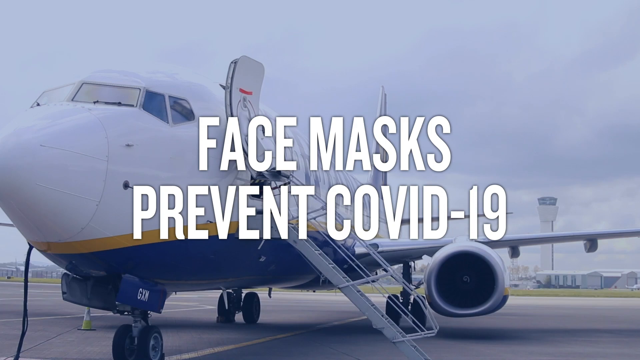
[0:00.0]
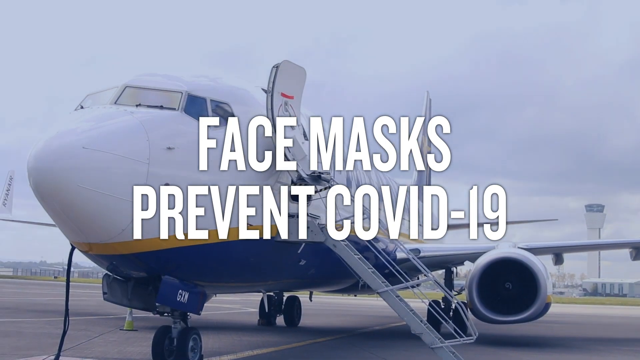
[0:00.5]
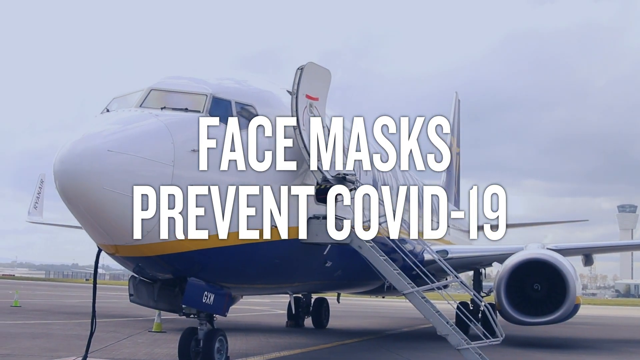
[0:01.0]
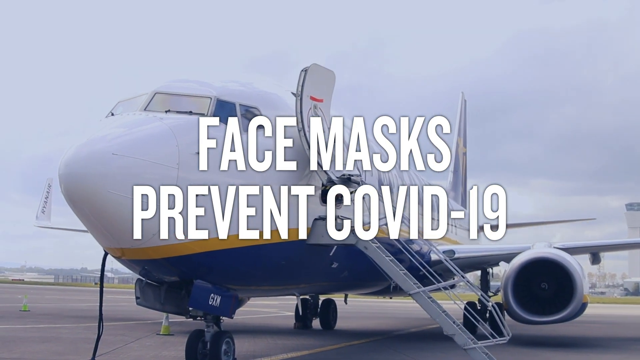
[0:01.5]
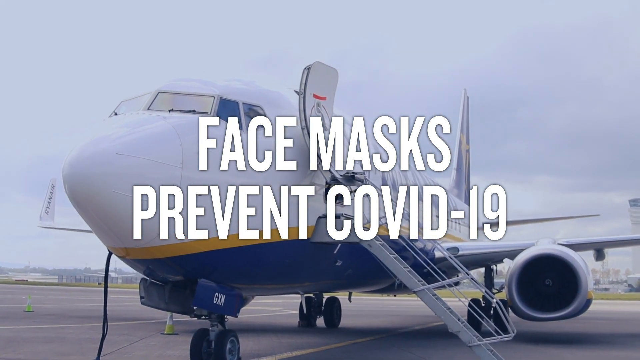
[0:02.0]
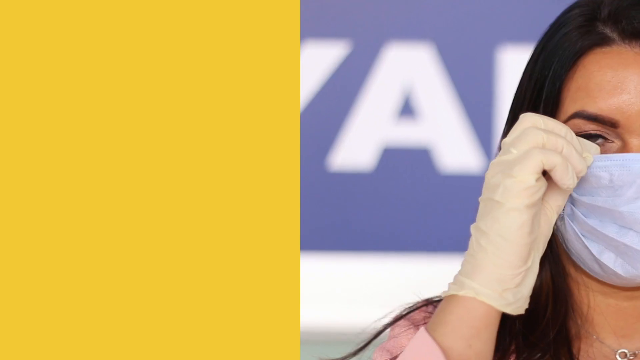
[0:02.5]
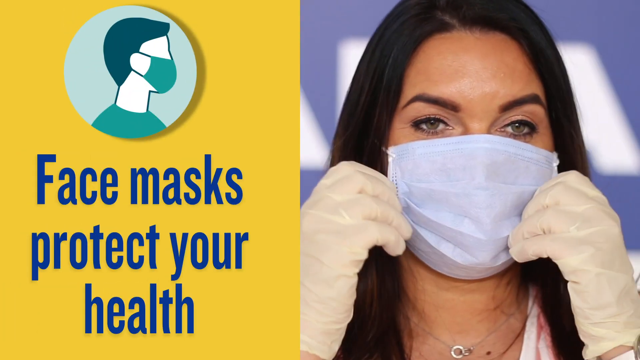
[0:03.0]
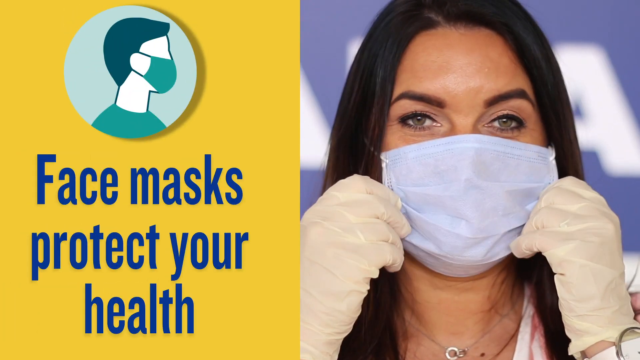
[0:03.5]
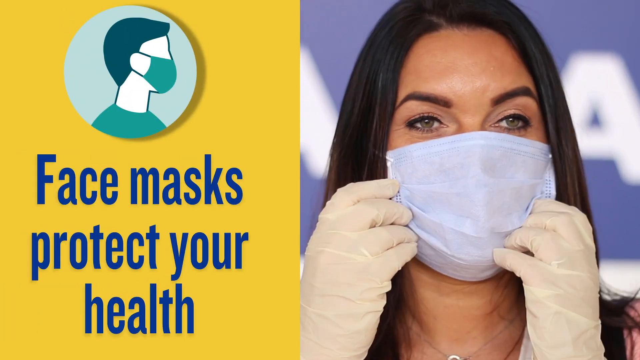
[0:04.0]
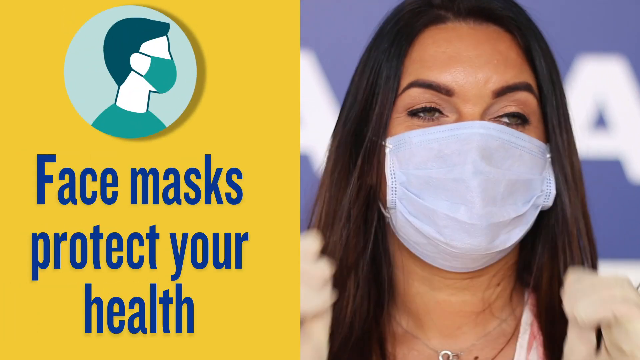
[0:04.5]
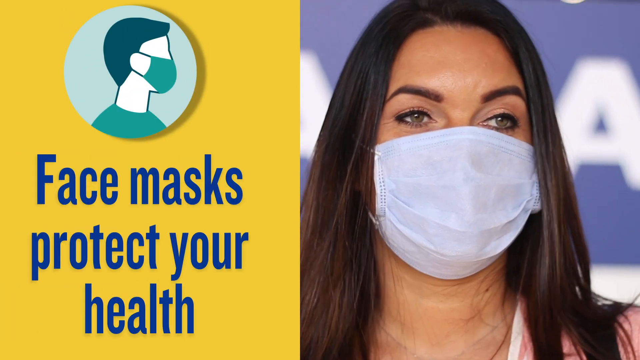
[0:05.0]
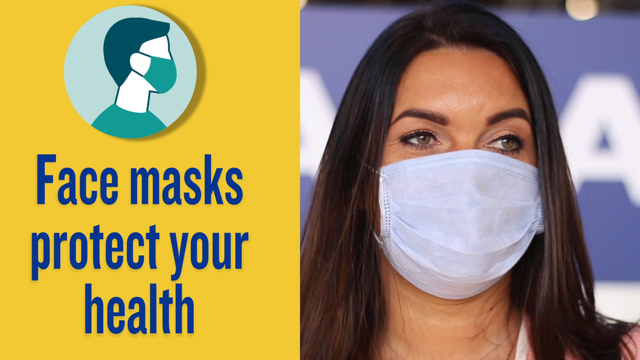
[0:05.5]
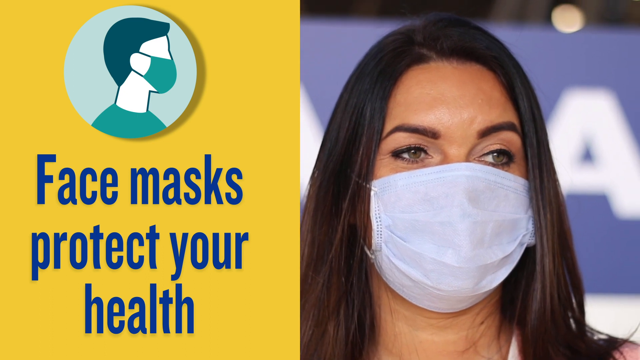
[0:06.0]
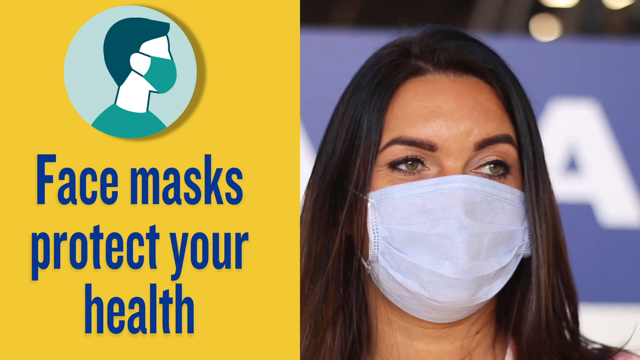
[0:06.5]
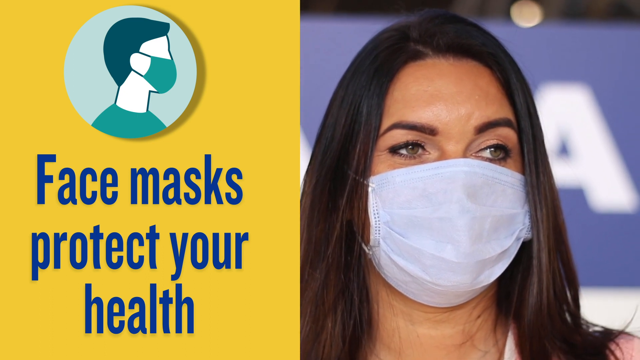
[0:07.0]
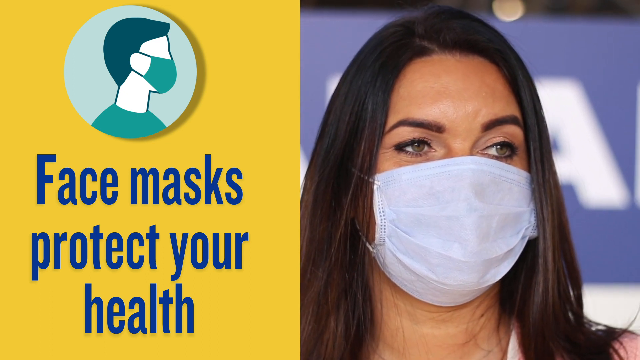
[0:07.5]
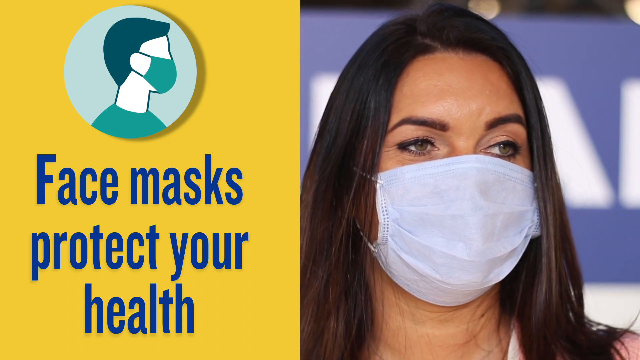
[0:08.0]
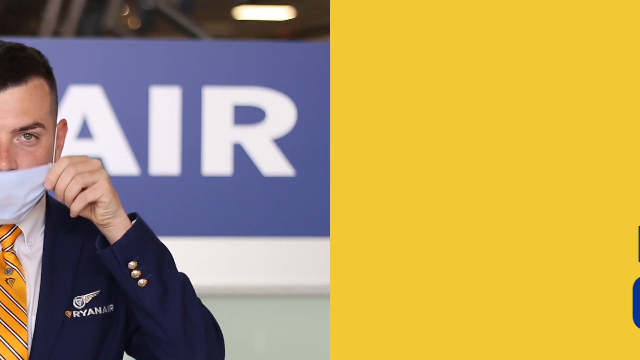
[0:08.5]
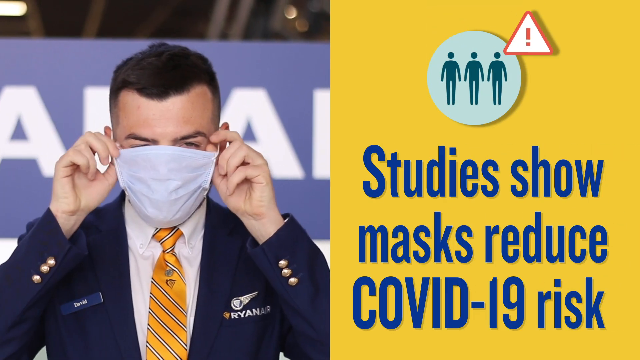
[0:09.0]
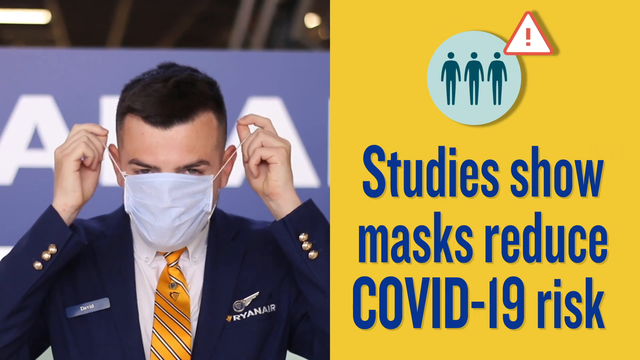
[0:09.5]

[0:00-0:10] An airplane is shown. The next screen has a yellow box on the left side, about halfway from the middle toward the left. A character with black hair wears a green mask over their face and a green shirt. On the right side, a woman with black hair, whose eyes are visible, uses her hands to place a mask over her face while looking toward the camera. She wears gloves and touches both sides of the mask. The view scrolls to the next area, which shows a man on the left side using both hands to place a mask onto his face, with a solid yellow box containing writing on the right side. The man looks out toward the camera.